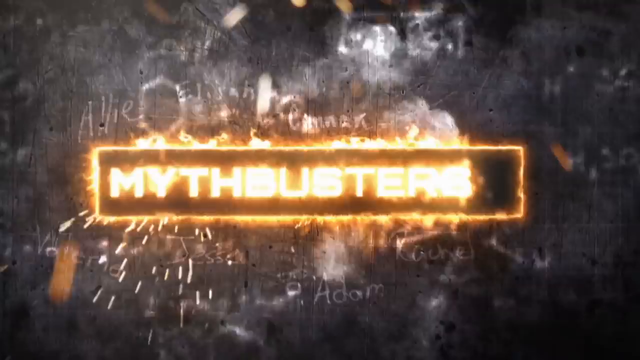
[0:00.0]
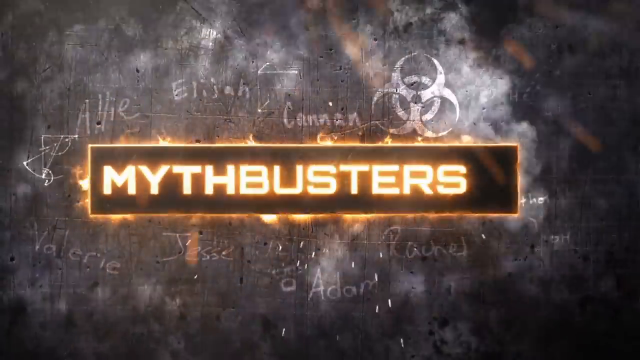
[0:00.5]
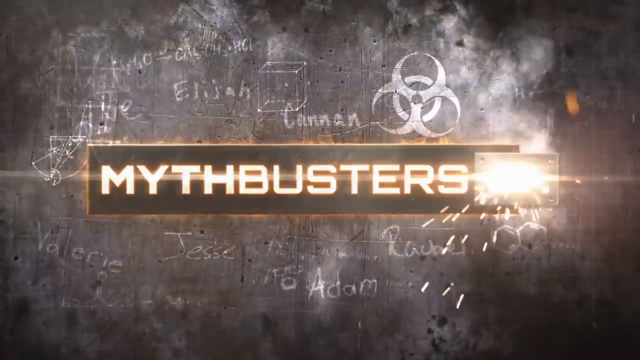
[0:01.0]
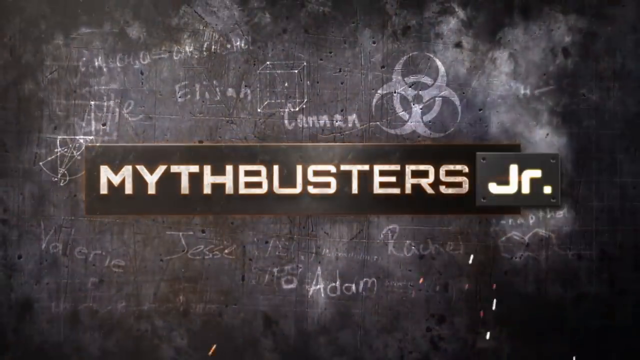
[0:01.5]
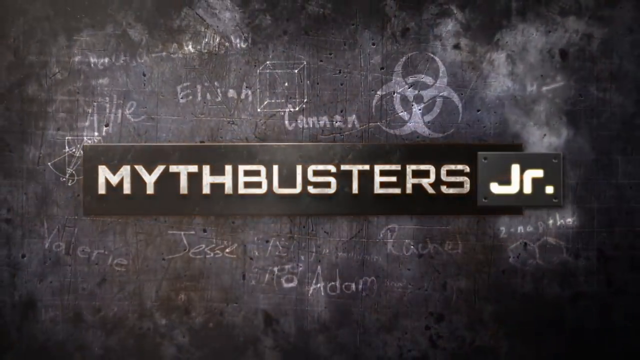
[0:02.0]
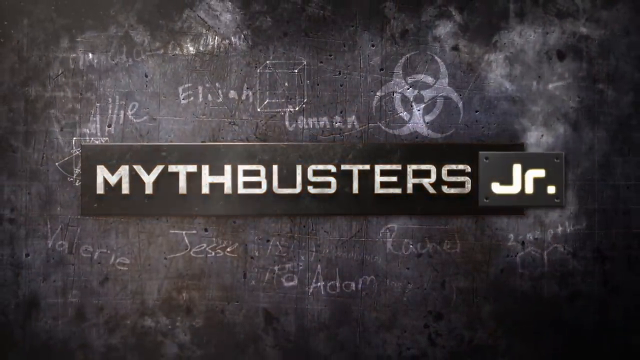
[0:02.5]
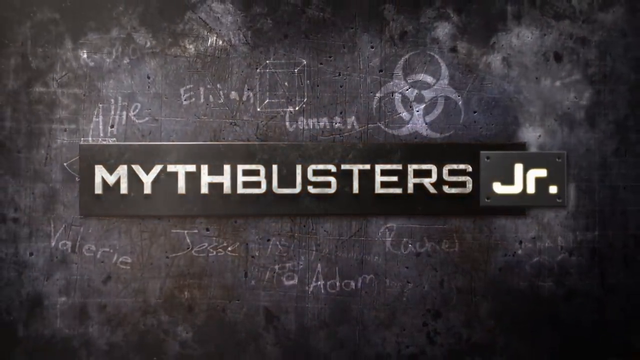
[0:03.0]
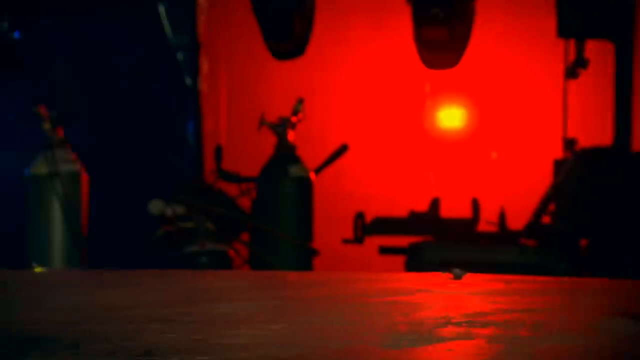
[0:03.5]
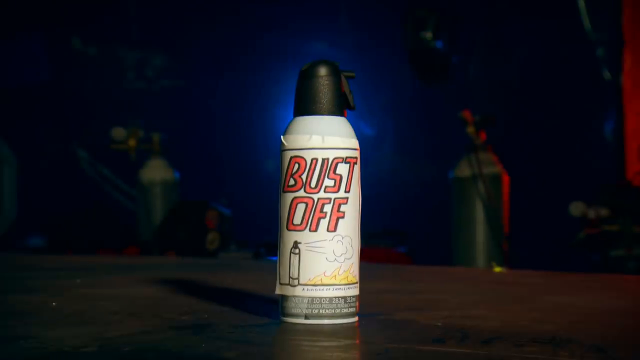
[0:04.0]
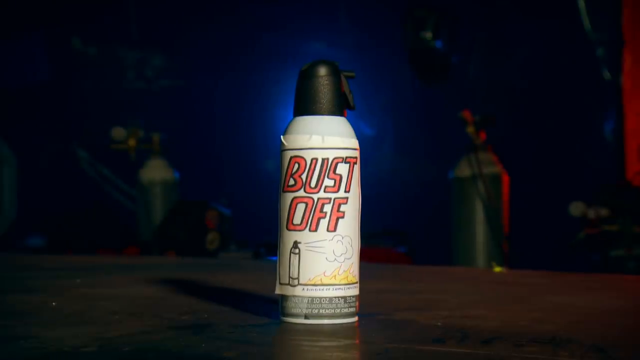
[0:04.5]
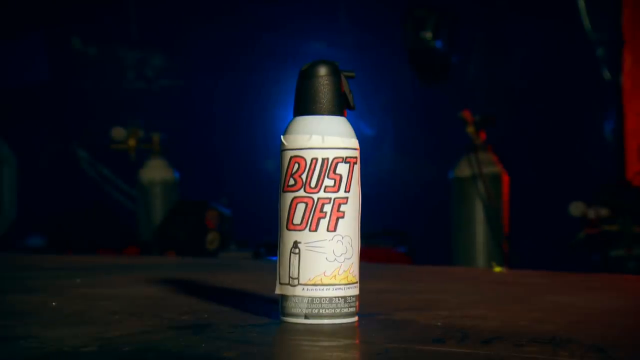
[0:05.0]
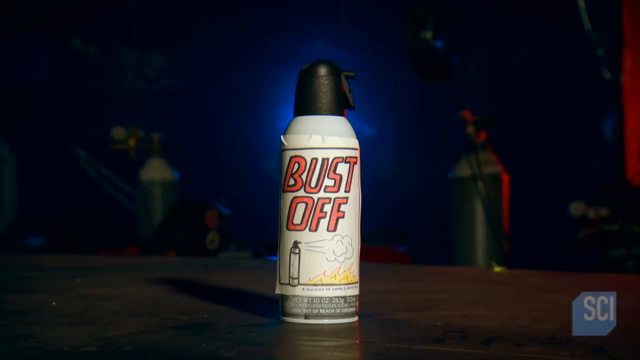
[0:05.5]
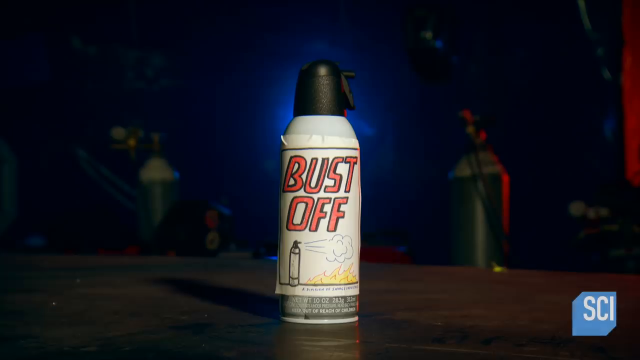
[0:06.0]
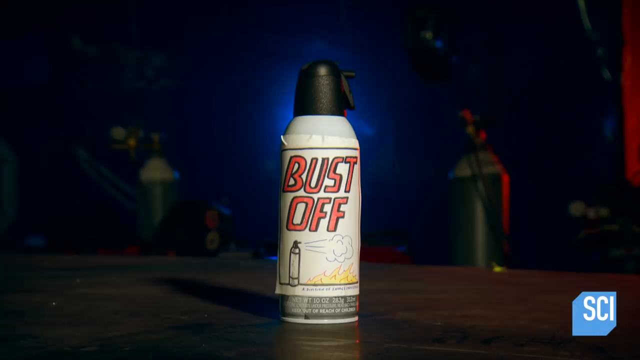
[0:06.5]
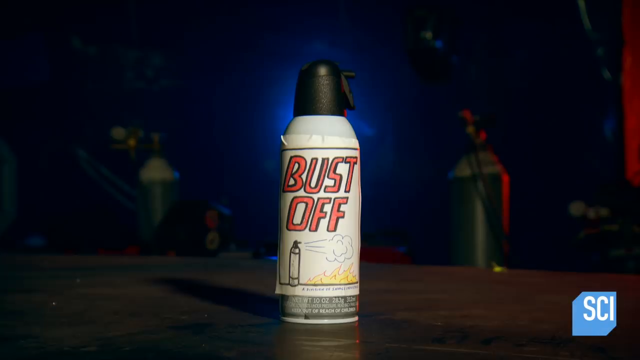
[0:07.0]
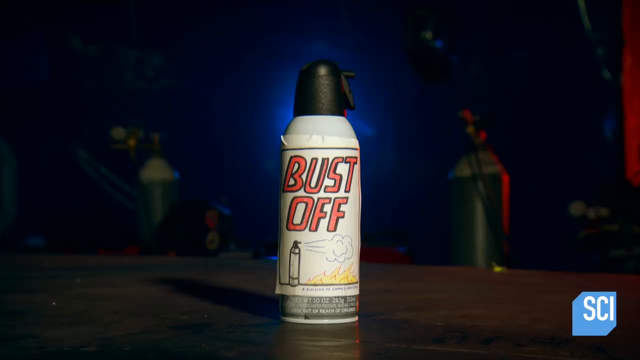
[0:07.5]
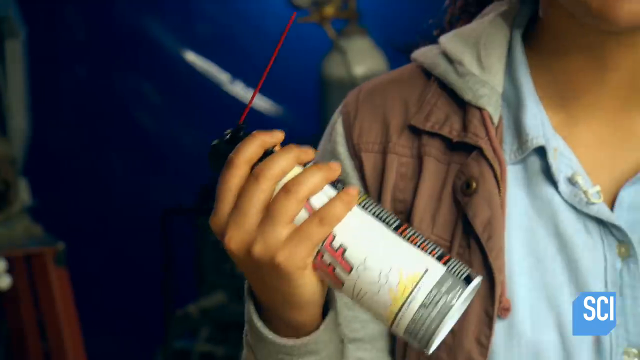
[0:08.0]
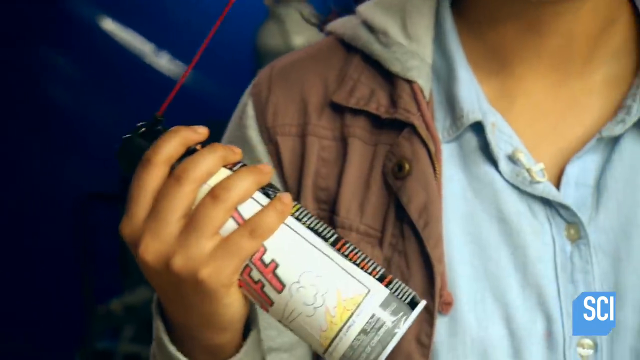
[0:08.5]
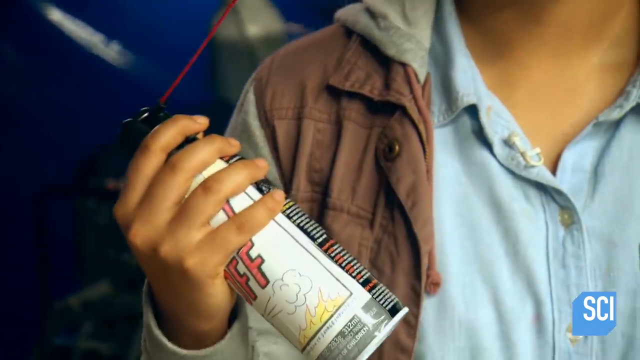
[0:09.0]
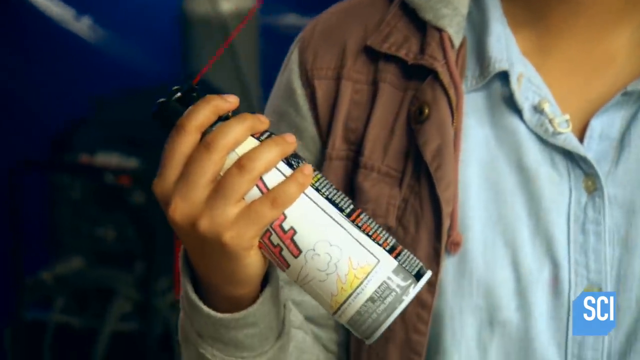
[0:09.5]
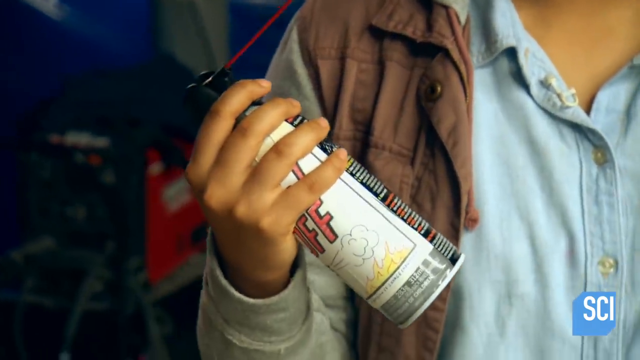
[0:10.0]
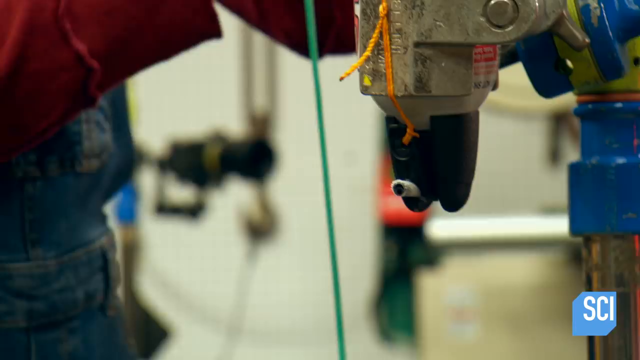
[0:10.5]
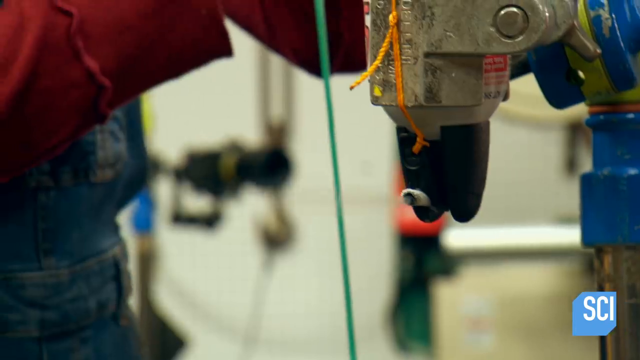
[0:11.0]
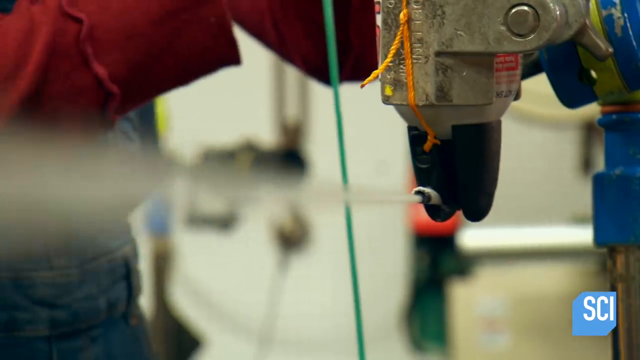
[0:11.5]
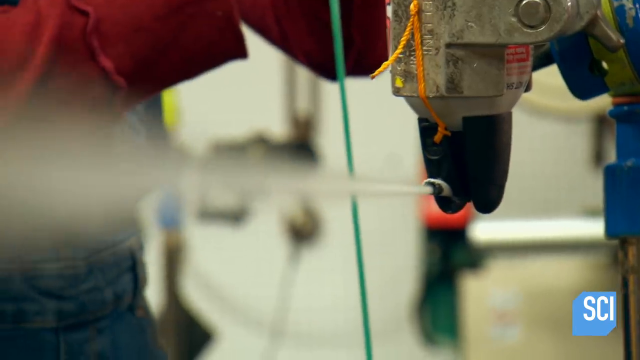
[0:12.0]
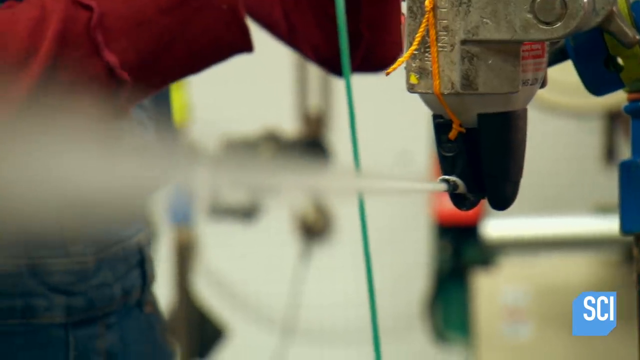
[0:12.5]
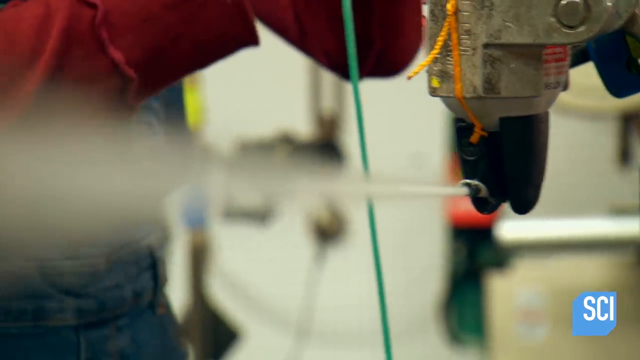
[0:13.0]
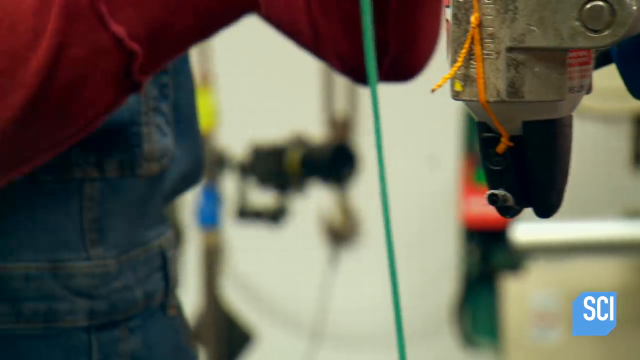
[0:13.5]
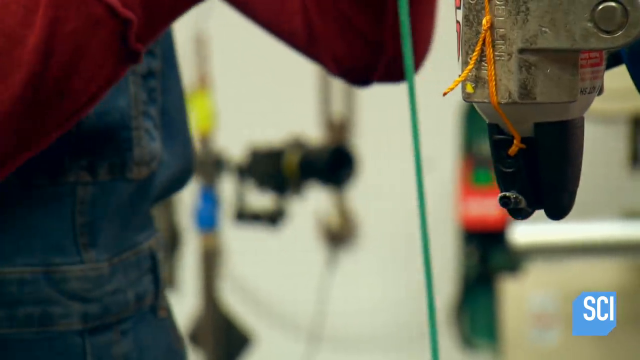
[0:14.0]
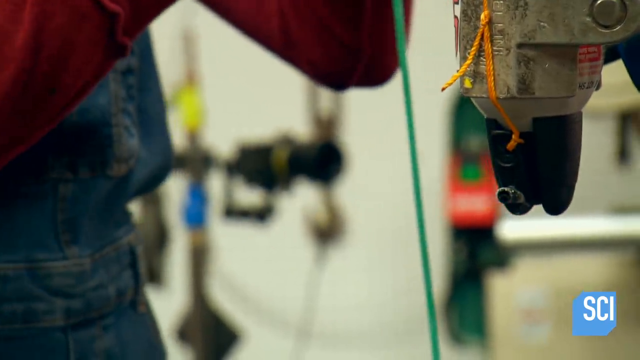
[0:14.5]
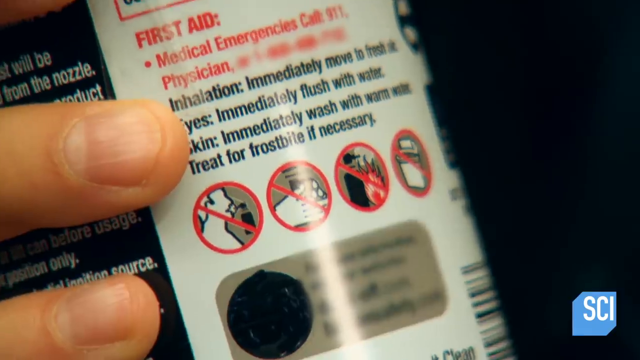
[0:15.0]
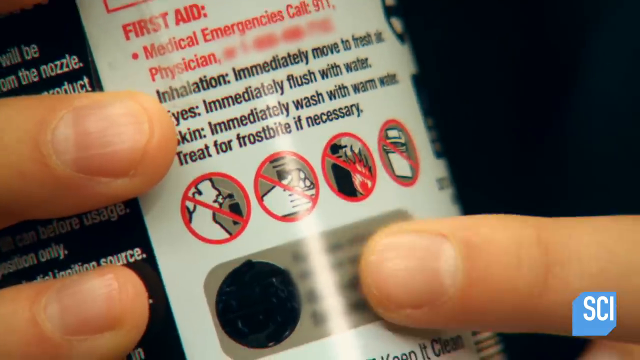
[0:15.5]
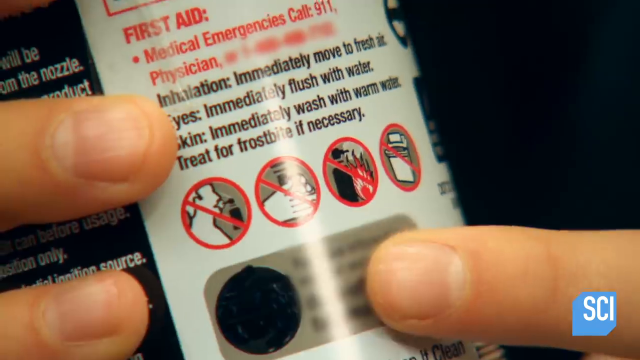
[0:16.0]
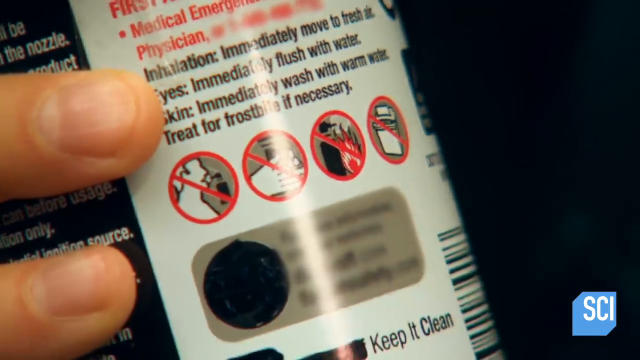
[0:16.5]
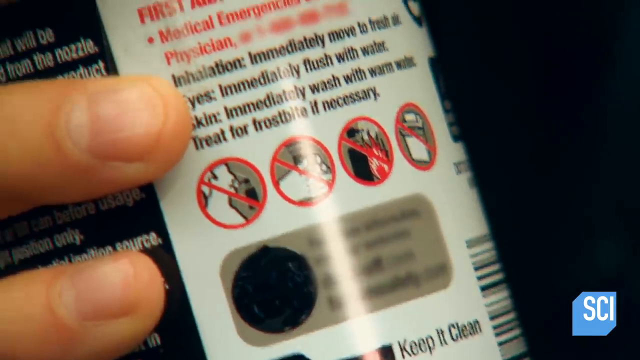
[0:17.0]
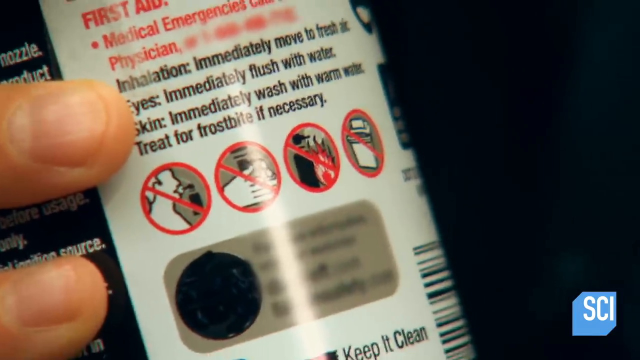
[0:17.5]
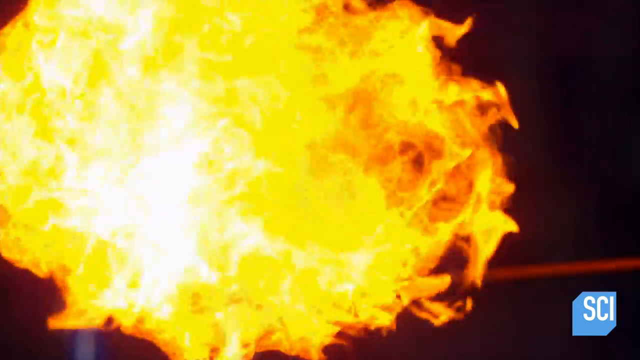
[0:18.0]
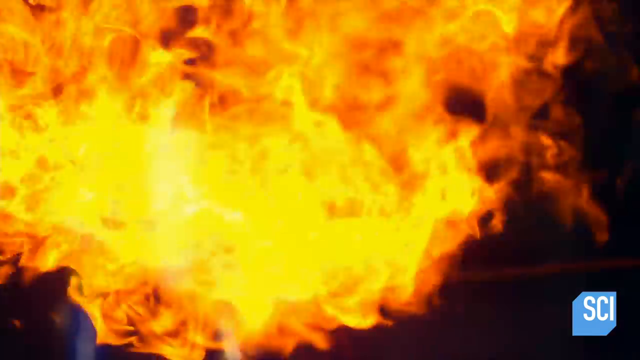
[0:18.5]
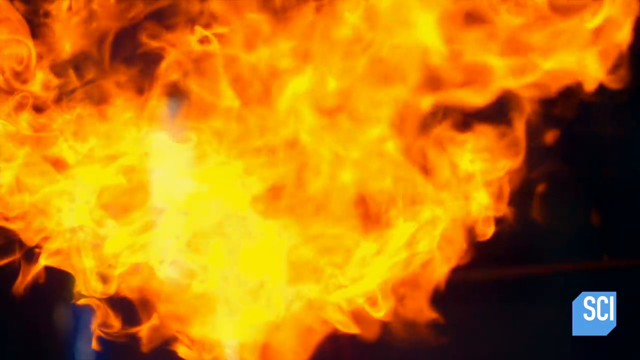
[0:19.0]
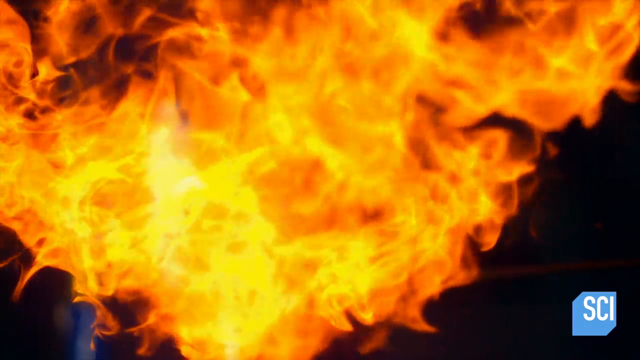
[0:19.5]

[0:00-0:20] The video is by Myth Busters Jr. A can stands on a brown table with a label written in red that reads "bust-off." The can is black with a white label and a black top with a red straw. The man holding the can wears a blue shirt with a brown jacket over it and blue denim. In a second scene, a man in blue overalls and a red long-sleeve shirt, possibly a mechanic, works on some machinery as spray comes out of it. In the next scene, a man holds the can, which shows some what-not-to-do pictures; one of them shows a man not inhaling the spray from the bust-off spray. The final scene is an explosion of orange and red colors; it looks like the spray was sprayed on and caused the explosion.